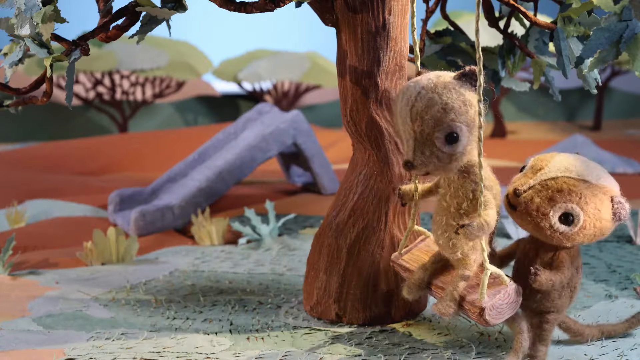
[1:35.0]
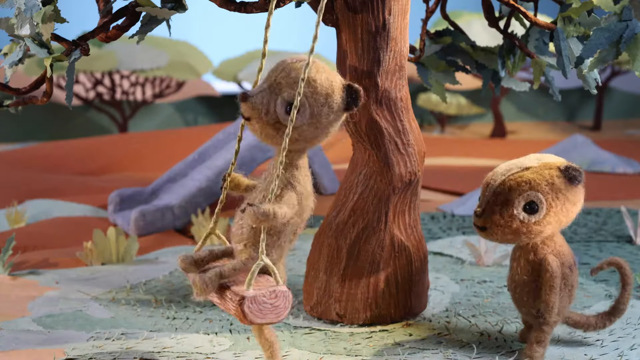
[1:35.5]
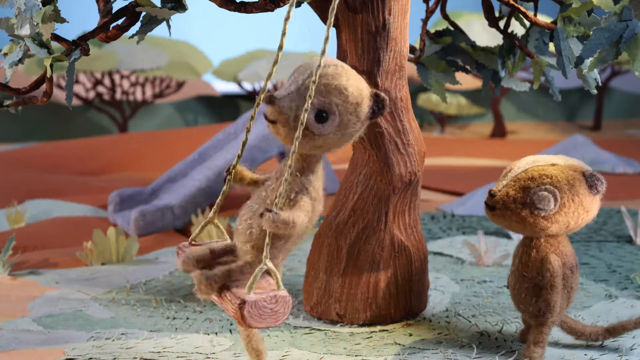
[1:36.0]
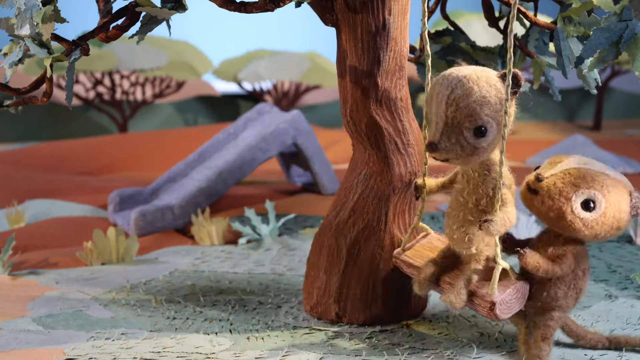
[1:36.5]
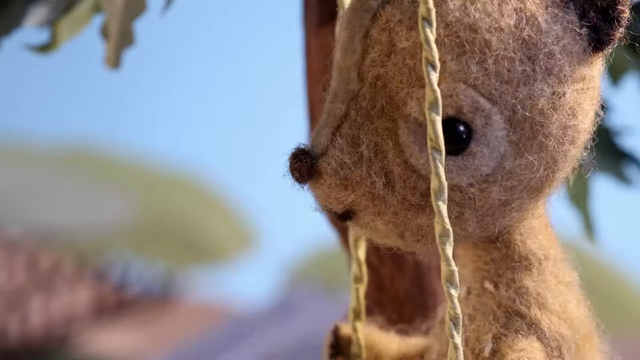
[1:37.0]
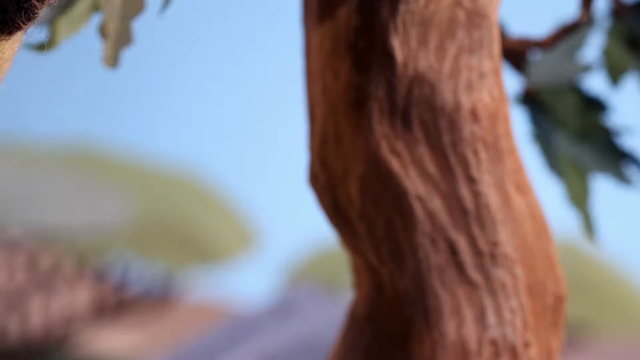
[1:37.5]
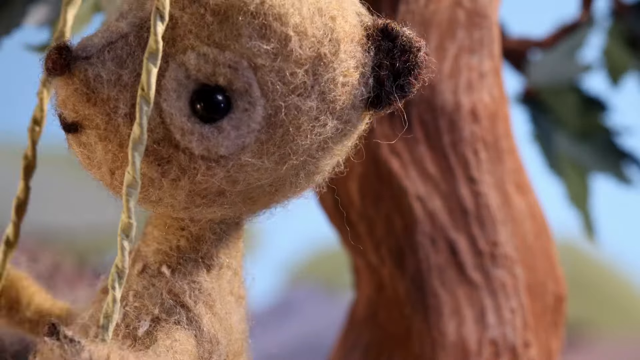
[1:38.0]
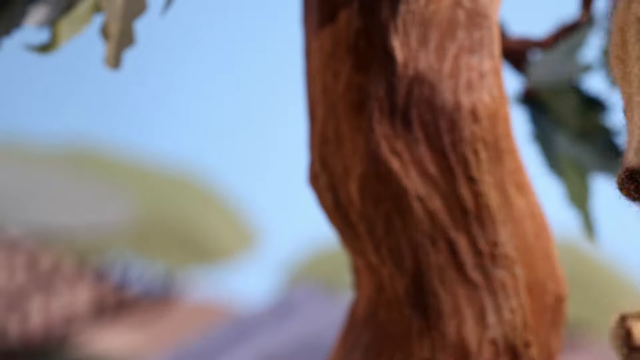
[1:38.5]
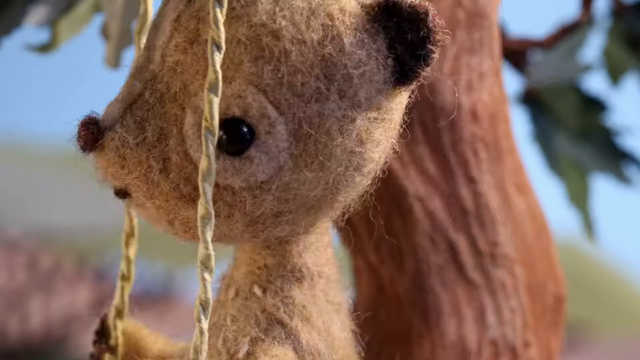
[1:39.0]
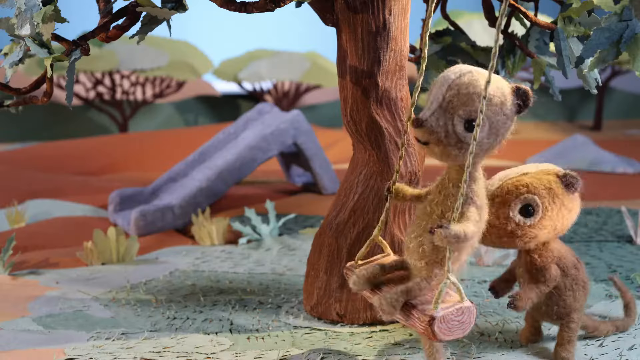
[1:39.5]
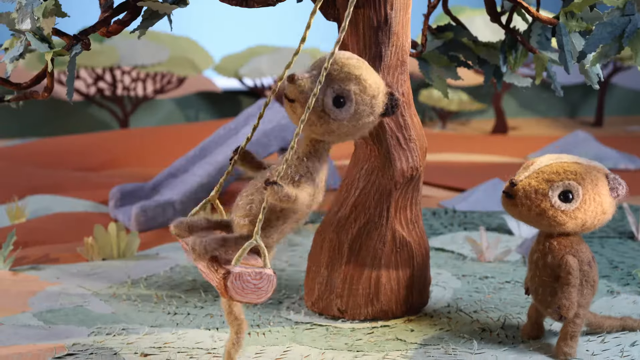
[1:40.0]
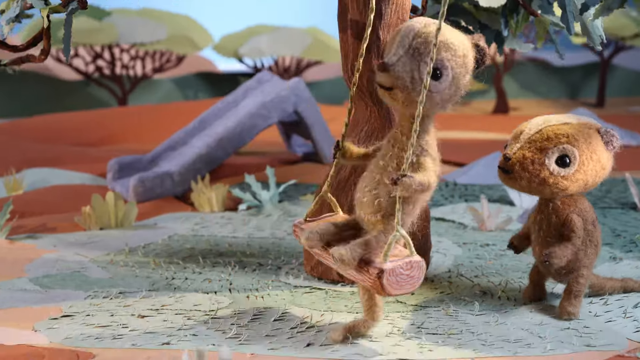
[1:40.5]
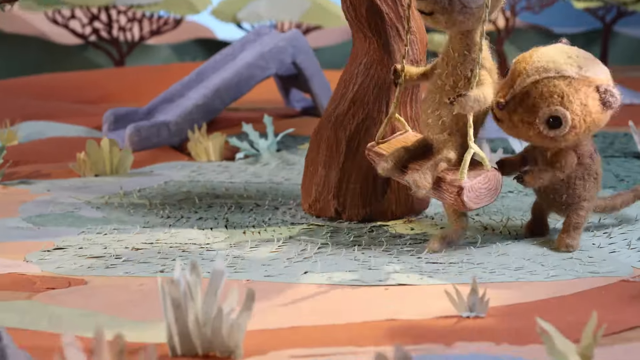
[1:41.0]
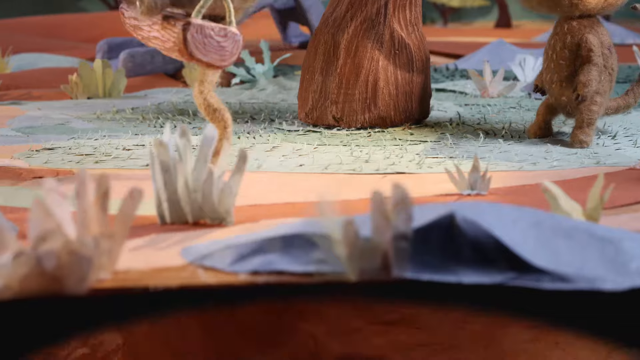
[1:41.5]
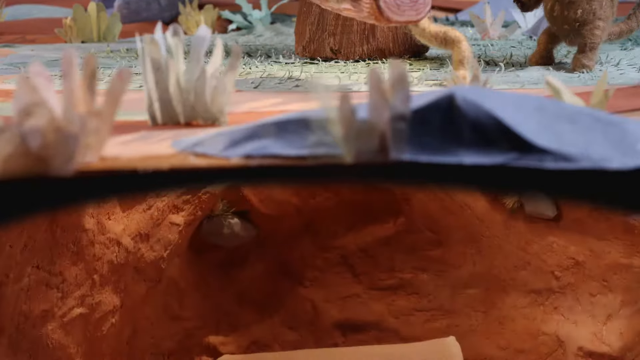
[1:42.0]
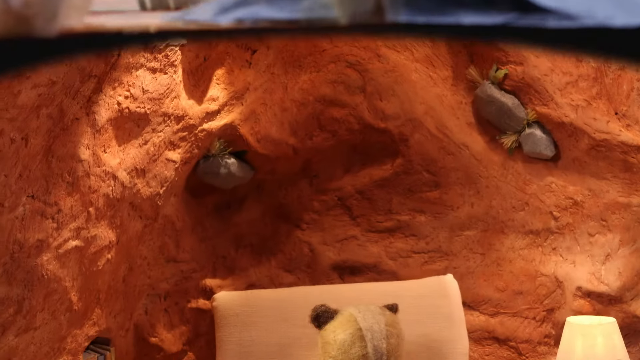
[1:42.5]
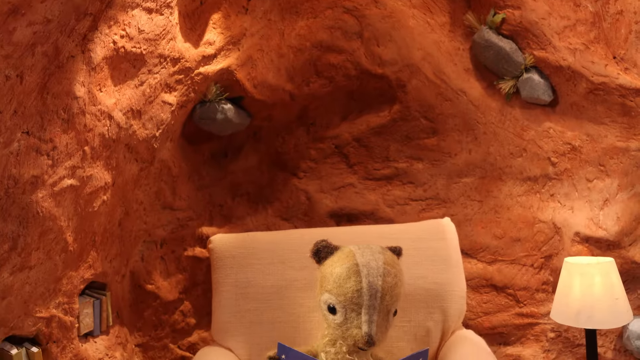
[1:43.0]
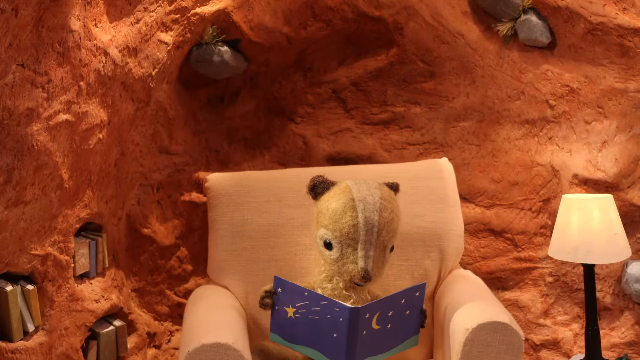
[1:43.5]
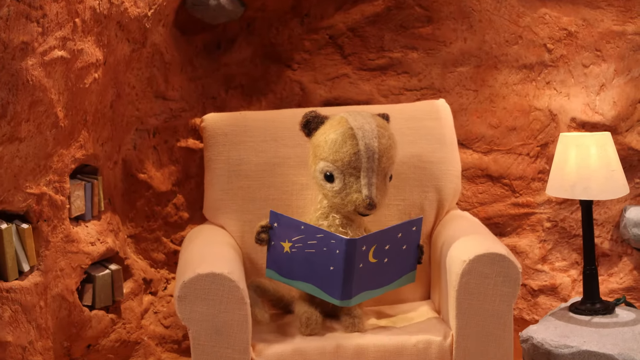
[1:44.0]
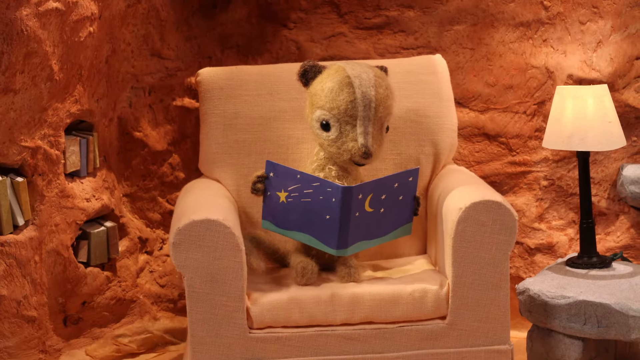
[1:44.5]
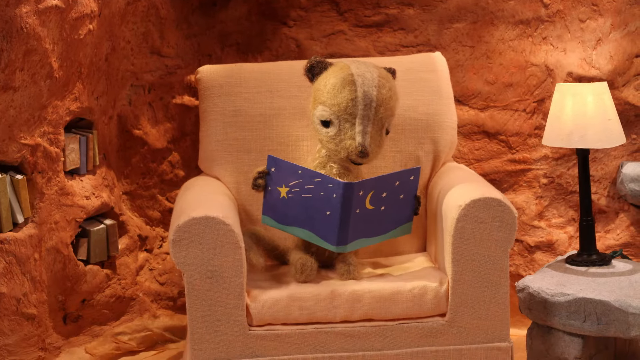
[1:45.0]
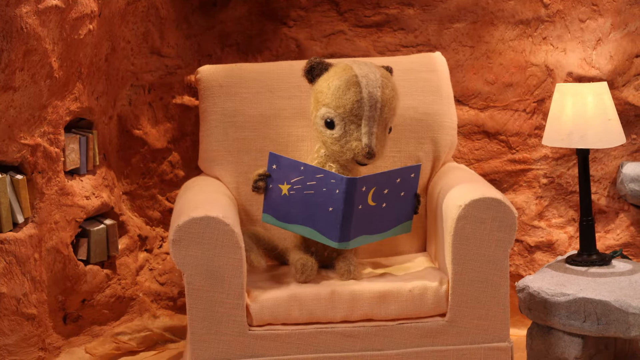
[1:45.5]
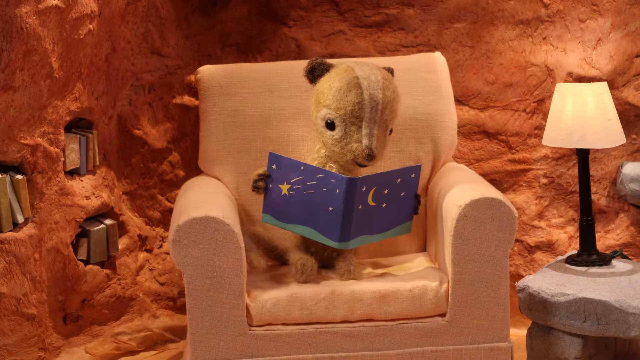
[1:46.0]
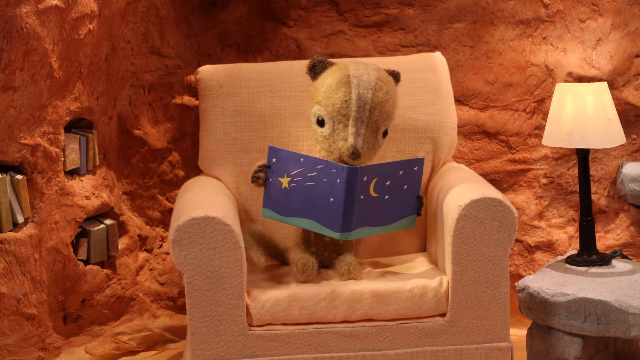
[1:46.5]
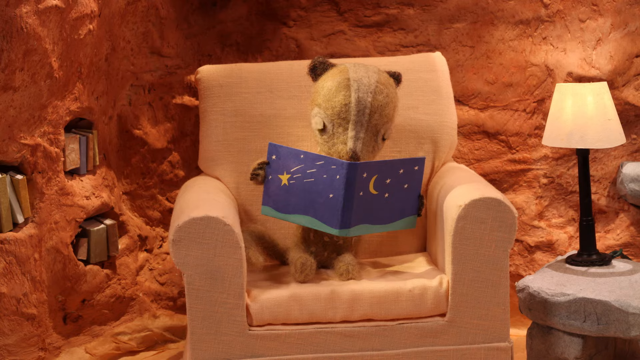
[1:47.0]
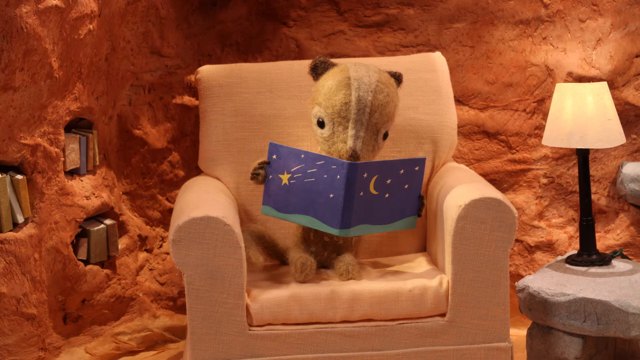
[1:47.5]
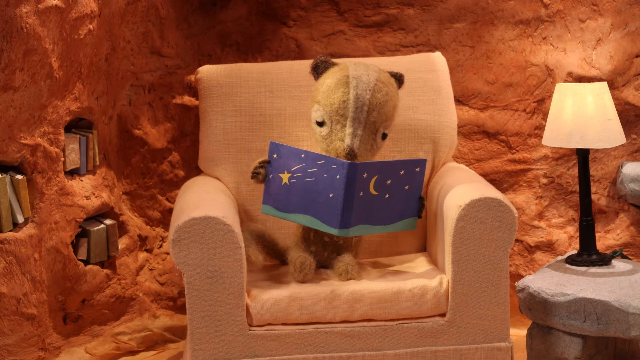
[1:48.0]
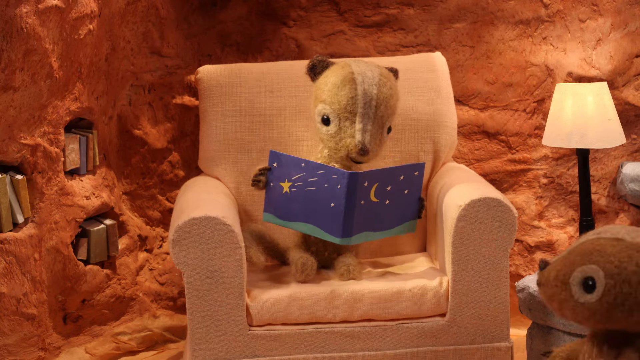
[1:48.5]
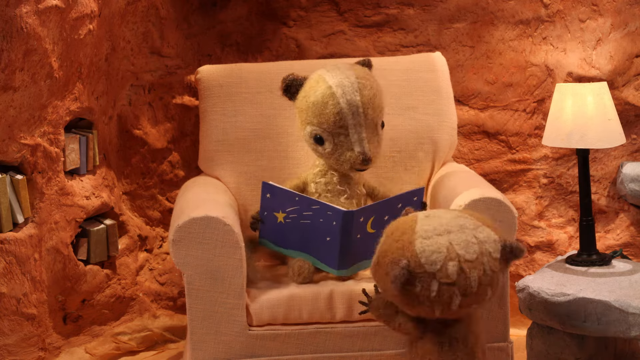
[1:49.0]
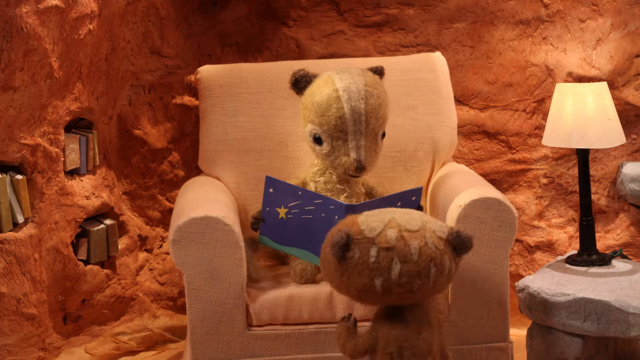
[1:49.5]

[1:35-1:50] Two animated squirrels, one larger than the other, are outside; one sits on a swing hanging from a tree while the other is behind him, pushing him higher and higher. Behind the tree are a slide, more trees and various yellow and green plants. The scene pans down underground, beneath where they were swinging. In this underground layer, one squirrel sits on a small cushion chair holding a book with stars and a moon on its cover. To his right is a lamp on a nightstand giving him light to read. The other squirrel walks up to the chair and grabs the book. On the left, shelves within the rock hold books.